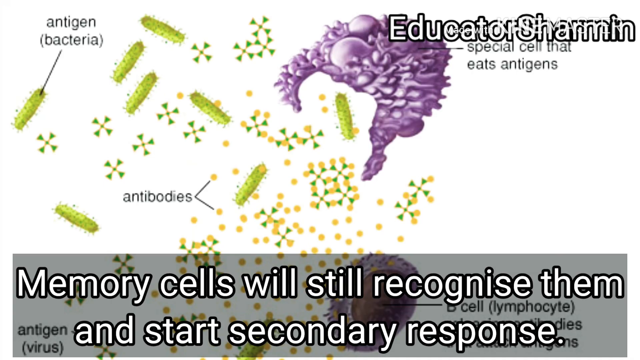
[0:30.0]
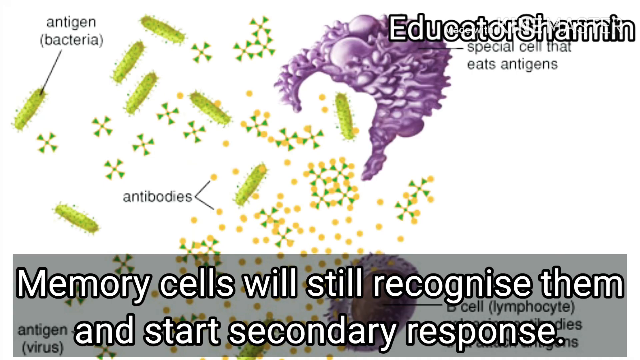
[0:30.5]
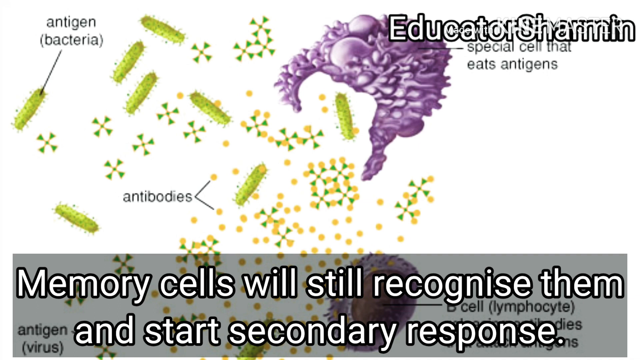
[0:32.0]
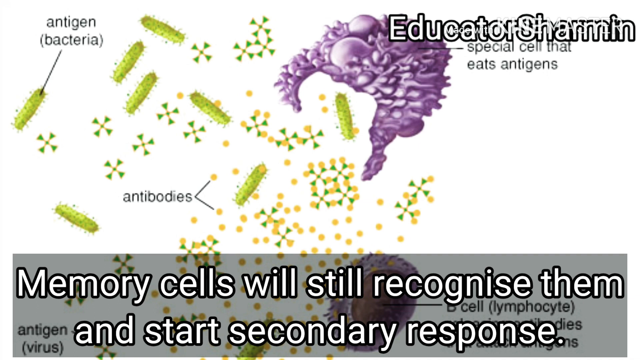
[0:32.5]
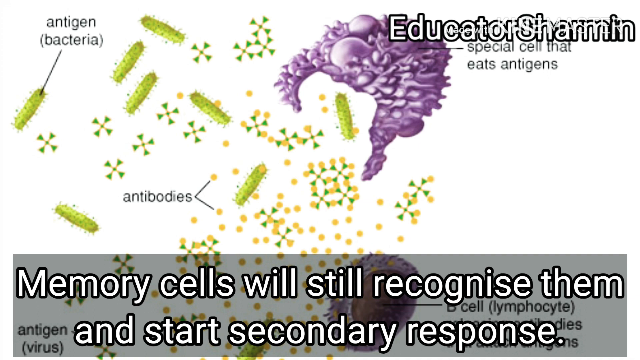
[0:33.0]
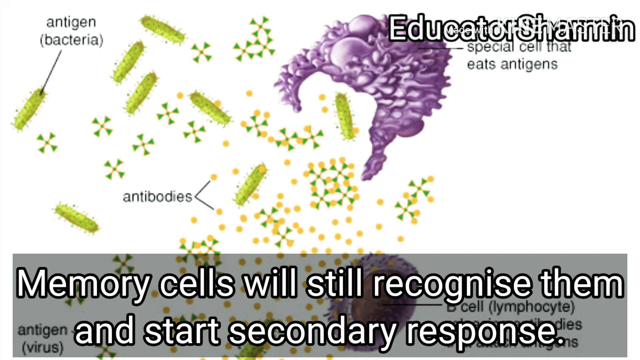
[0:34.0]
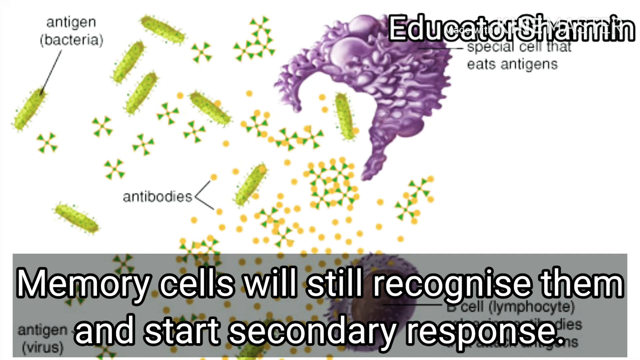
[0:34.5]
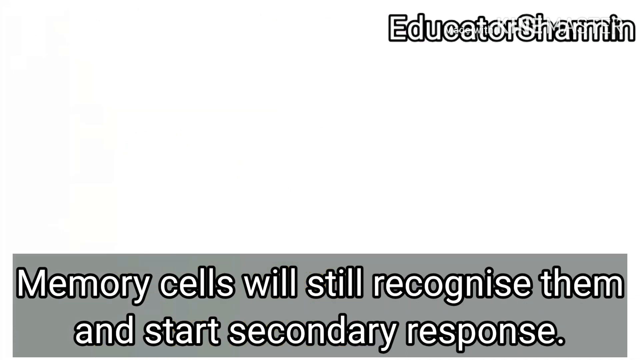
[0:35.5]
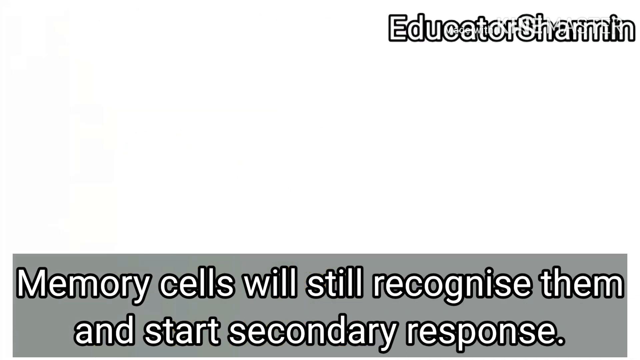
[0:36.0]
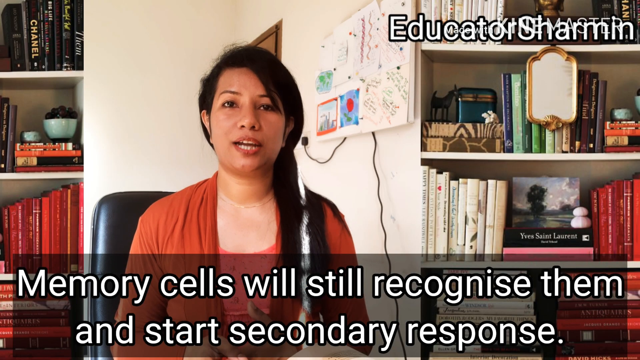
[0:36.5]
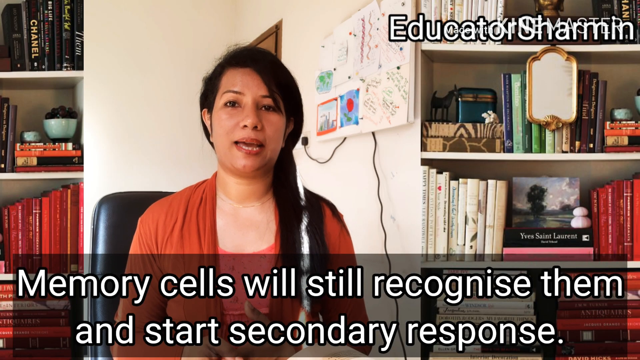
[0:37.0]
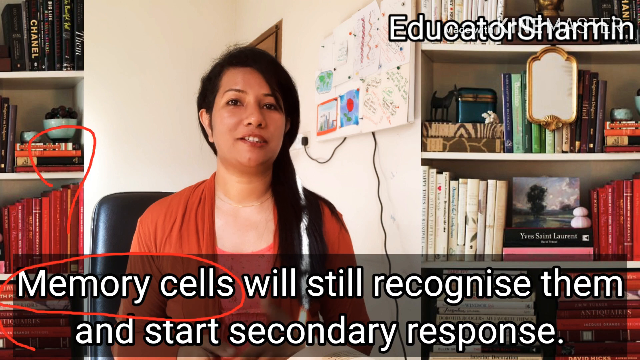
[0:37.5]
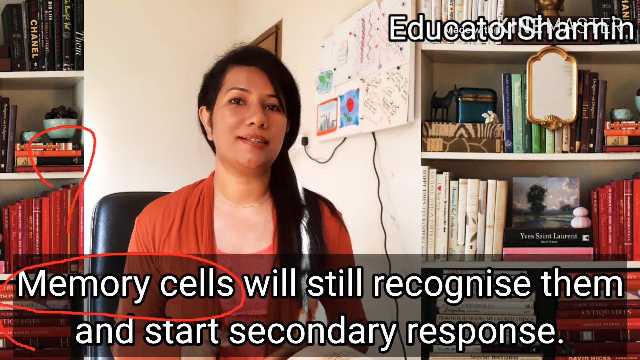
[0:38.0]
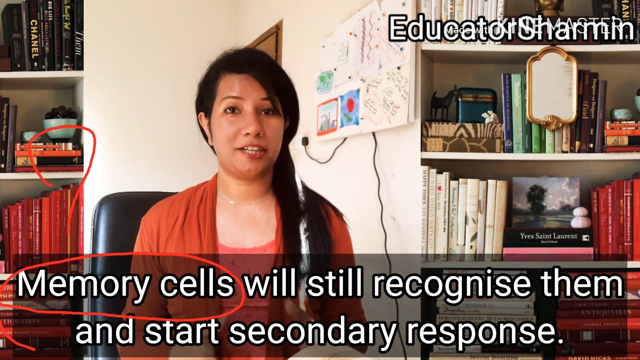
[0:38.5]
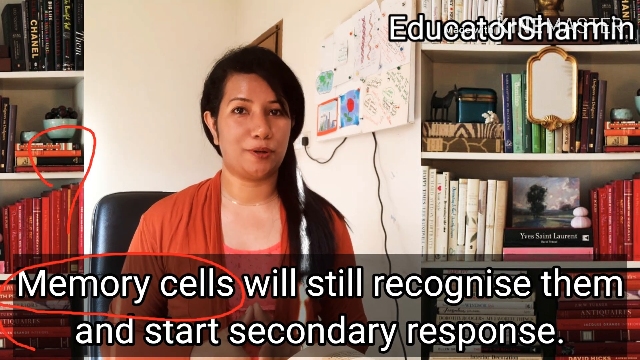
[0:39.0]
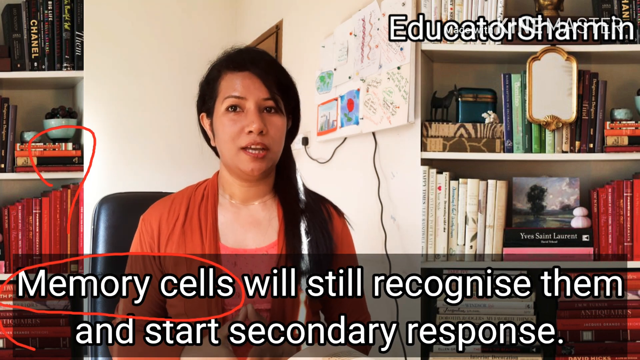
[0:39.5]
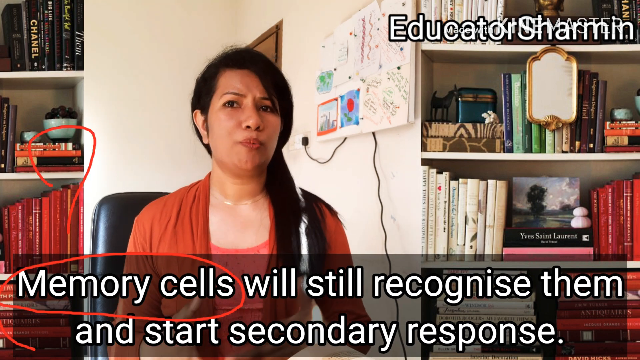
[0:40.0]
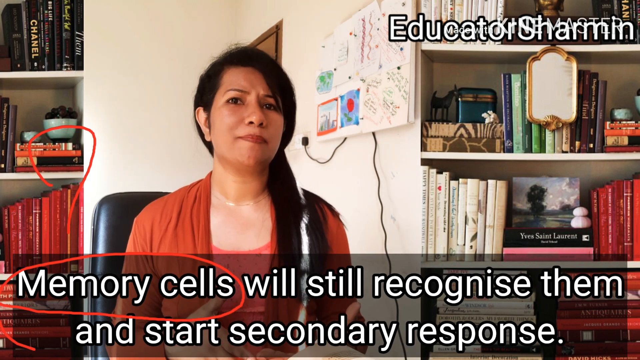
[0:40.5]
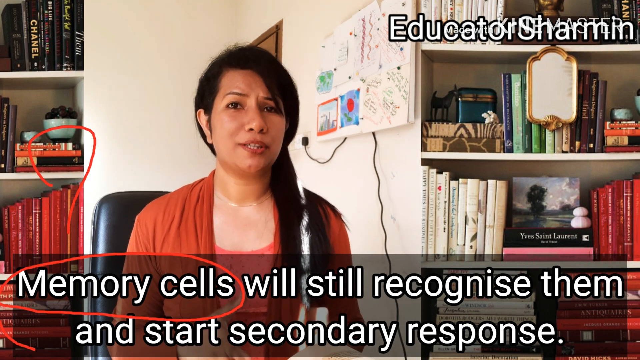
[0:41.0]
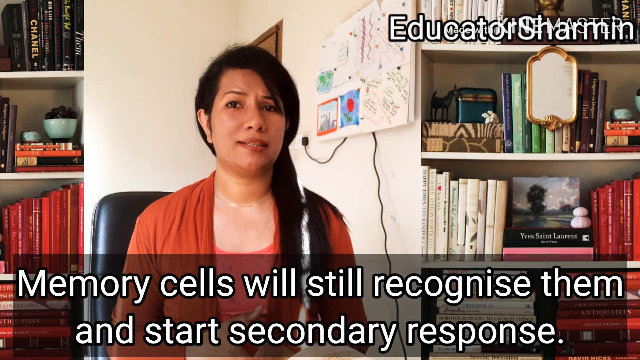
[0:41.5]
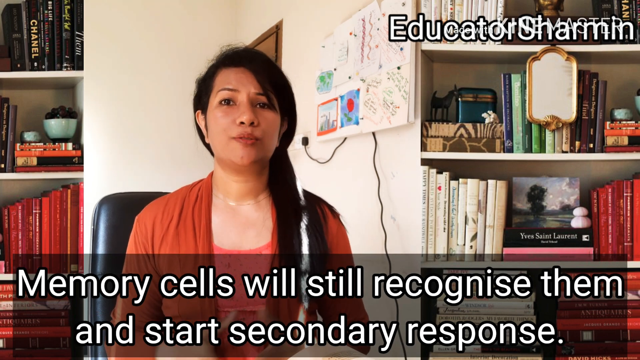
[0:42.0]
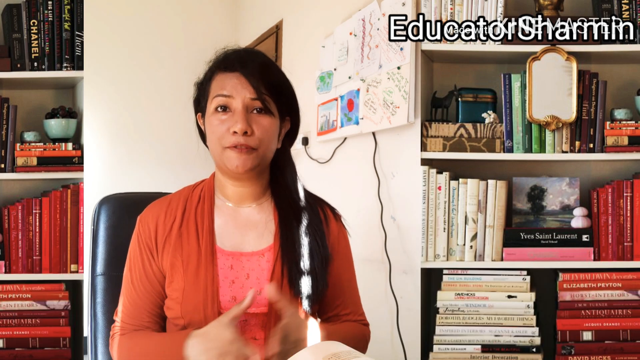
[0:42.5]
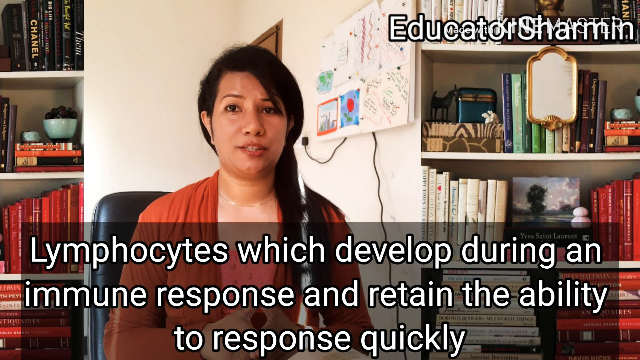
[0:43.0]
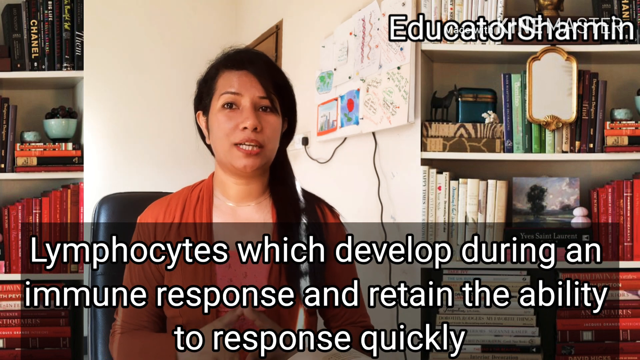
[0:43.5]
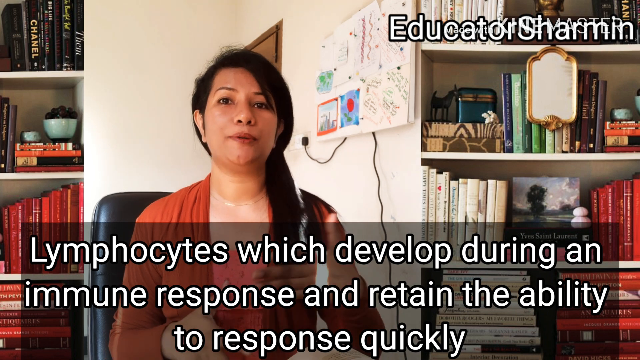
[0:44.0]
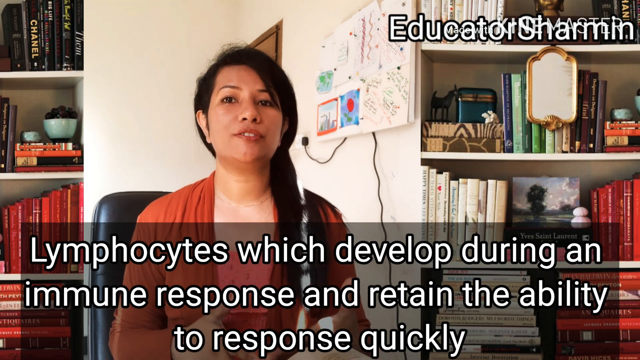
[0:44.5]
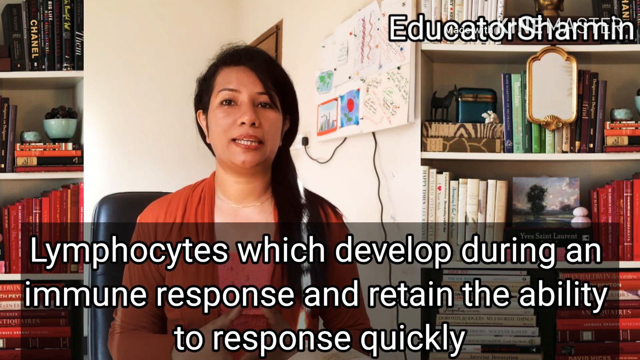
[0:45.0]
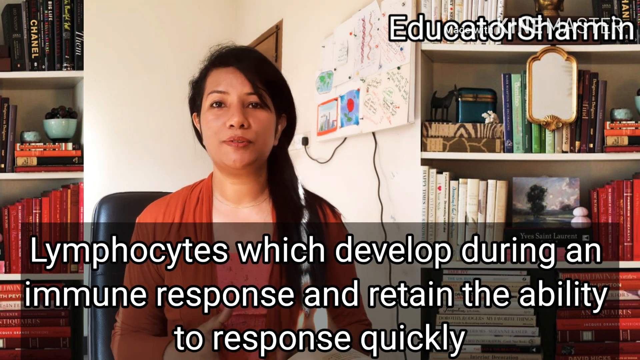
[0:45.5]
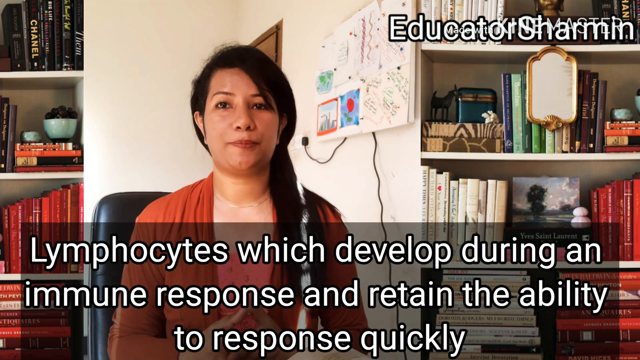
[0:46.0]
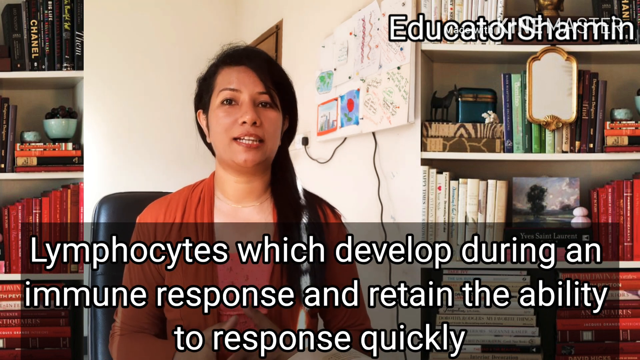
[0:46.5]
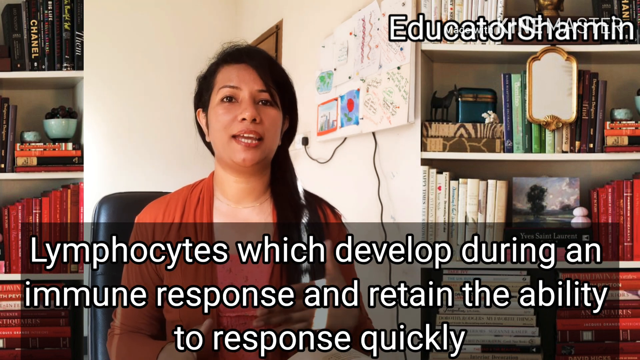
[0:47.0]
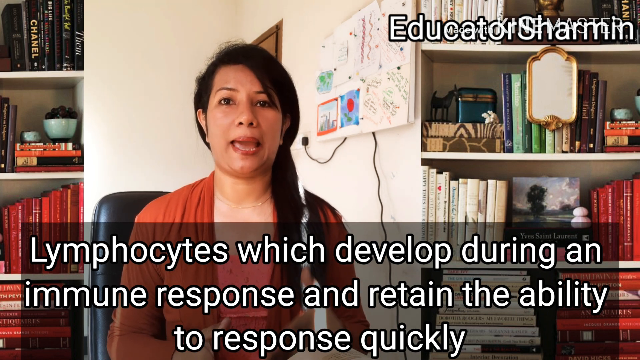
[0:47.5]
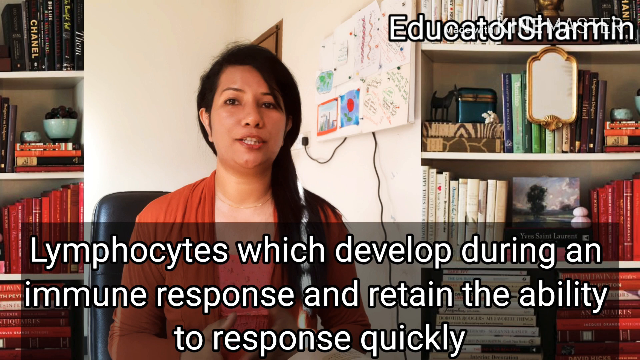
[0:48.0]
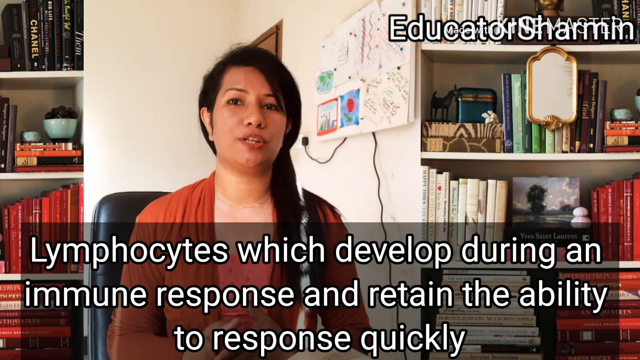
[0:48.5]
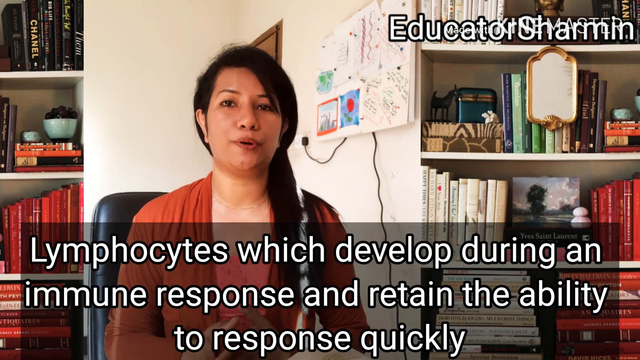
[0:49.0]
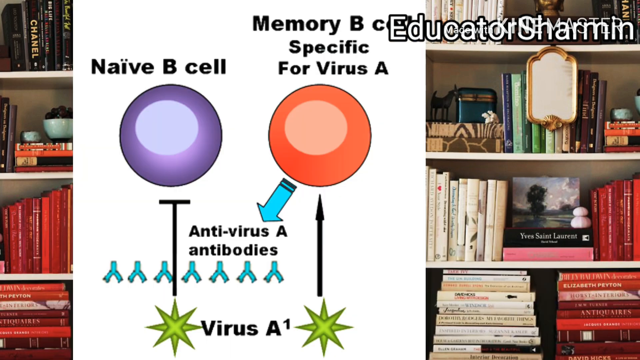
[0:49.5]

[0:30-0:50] A slide reads "Antigen bacteria, special cell that eats antigens, antibodies, memory cells will still recognize them and start secondary response," with a red circle around the words "Memory cells." Another piece of information pops up reading "Lymphocytes which develop during an immune response and retain the ability to response quickly." Briefly, a picture of a purple circle and an orange circle appears with text reading "Memory B cell, specific for virus A, naive B cell." A blue arrow below the orange circle points to the words "Anti-virus A antibodies." Two green stars are between the words "Virus-A1," and two vertical lines point to either side of the green stars and to the purple and orange circles. Behind the information and the picture is a large bookshelf full of books organized by color. The top right of the screen reads "EducatorSharmin."